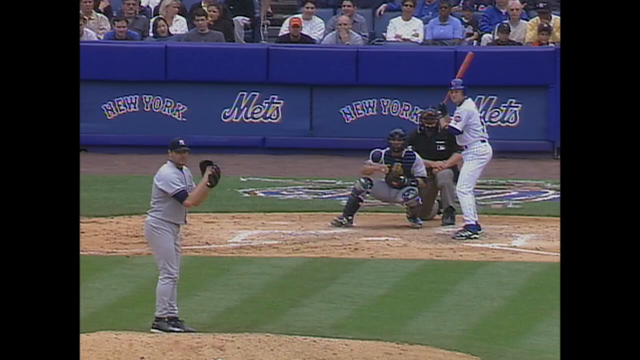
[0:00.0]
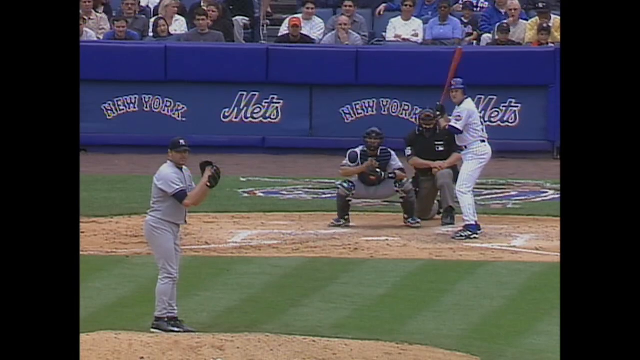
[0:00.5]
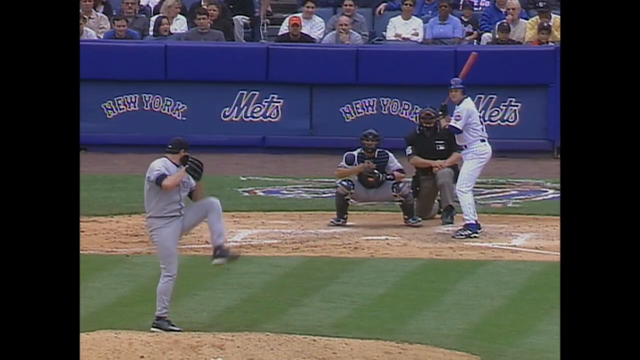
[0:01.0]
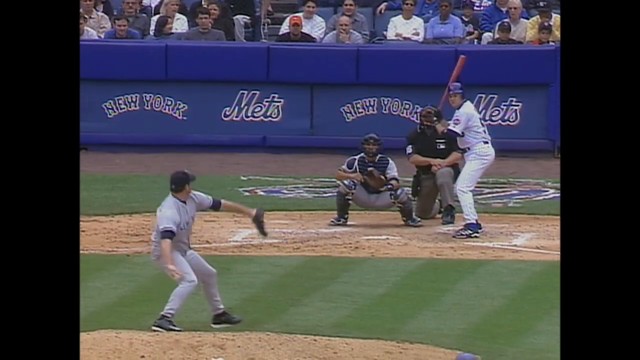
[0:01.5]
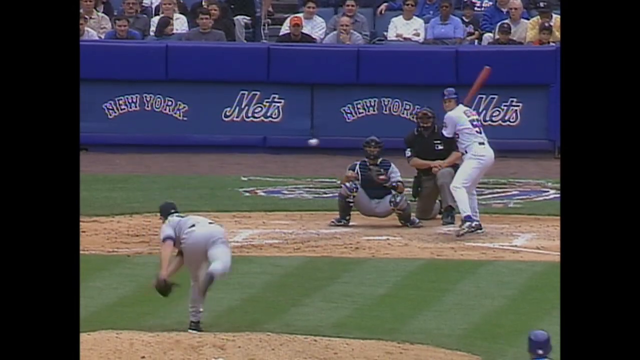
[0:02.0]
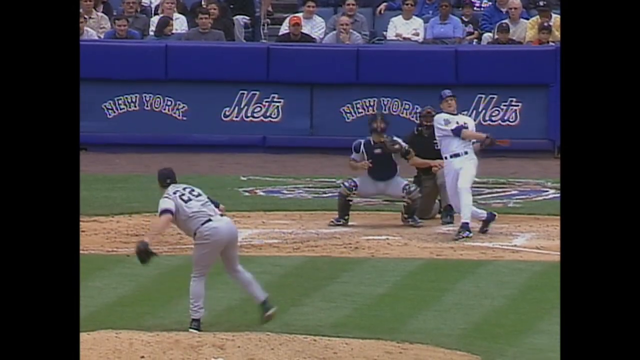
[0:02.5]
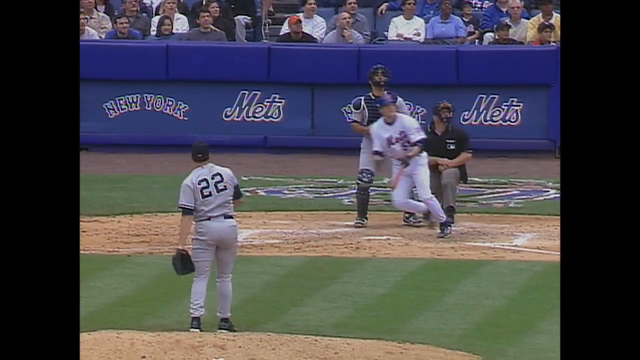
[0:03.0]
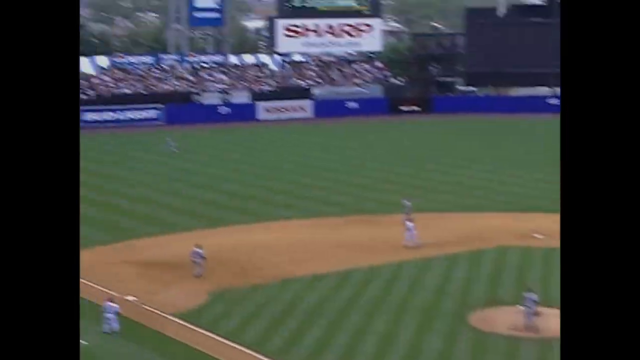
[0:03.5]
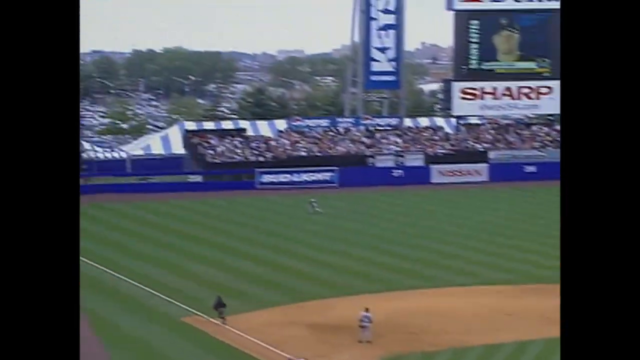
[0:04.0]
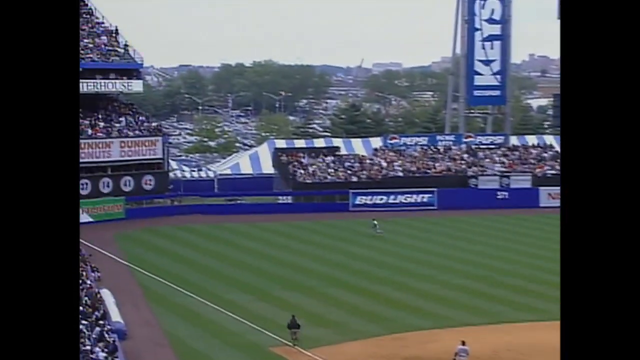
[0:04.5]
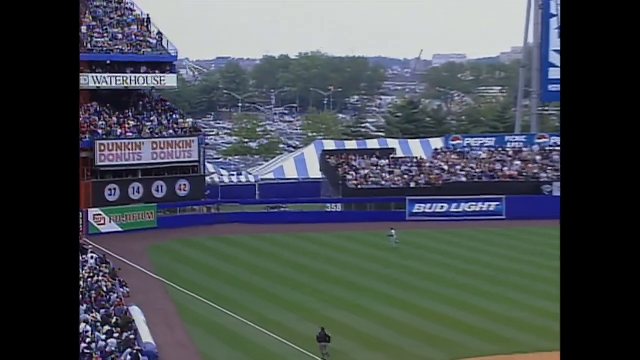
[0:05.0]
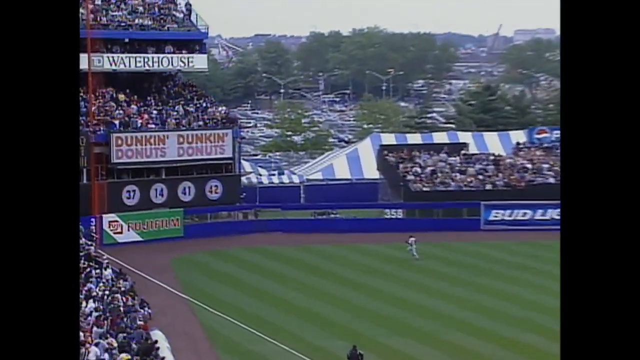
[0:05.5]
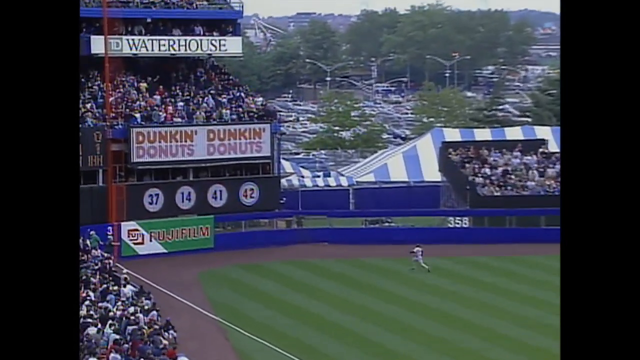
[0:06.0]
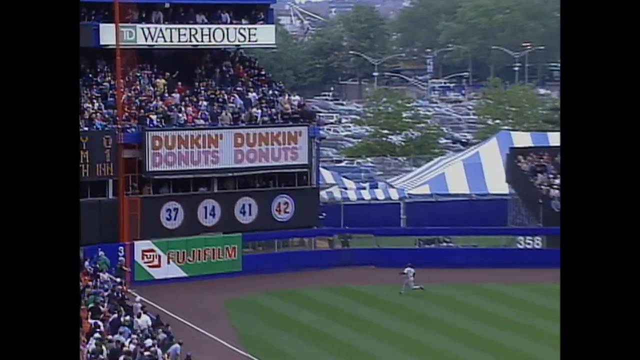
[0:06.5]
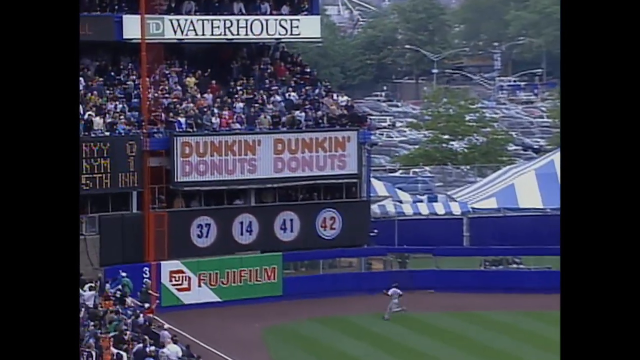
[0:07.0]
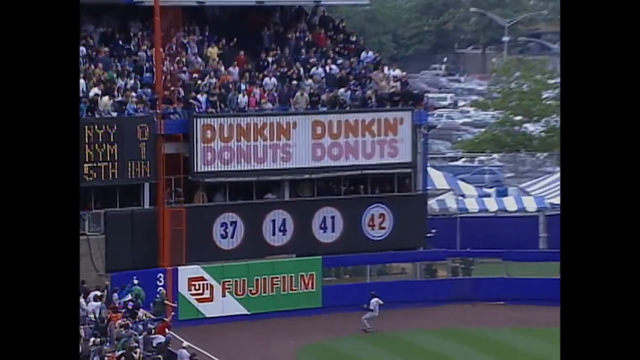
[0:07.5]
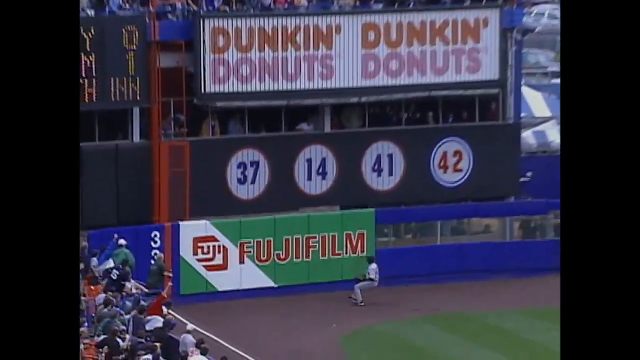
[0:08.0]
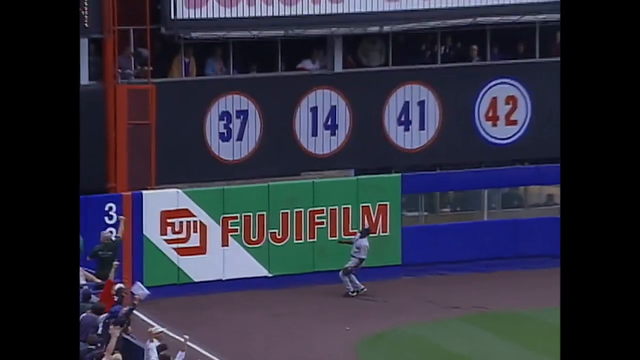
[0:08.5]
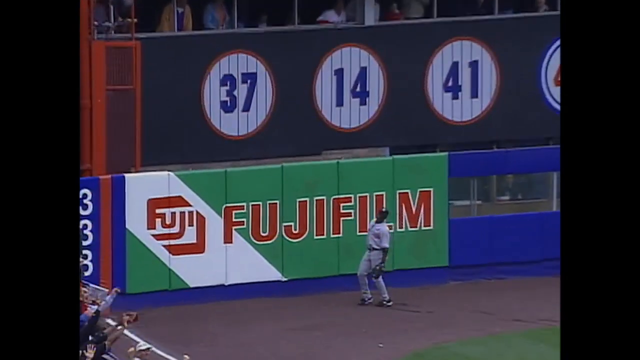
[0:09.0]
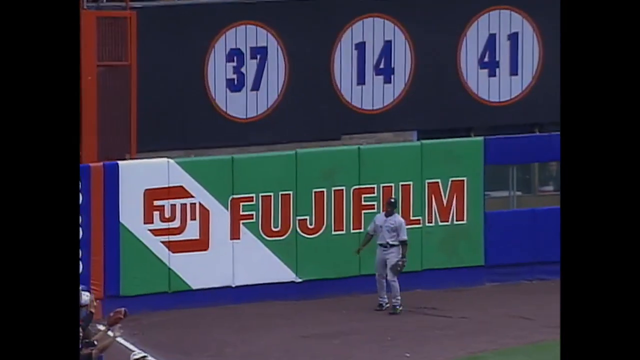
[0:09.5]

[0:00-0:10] The scene begins during a baseball game between the New York Yankees and the New York Mets. The Yankees are pitching, wearing a gray jersey with a dark blue hat, and the Mets are hitting. The hitter wears a white striped jersey and a blue helmet and holds a red bat. The pitcher holds his right hand in his glove, holding onto the ball, and looks behind him. The catcher behind the plate shifts his weight slightly to the left, anticipating the pitch. The pitcher picks up his left leg and brings his right arm back with the ball, then steps forward, bringing his arm forward, and releases the ball above his head. The hitter picks up his left foot, getting ready to hit, as the ball moves closer to the catcher and the hitter. He swings, and the bat makes contact with the ball as he takes a step forward out of the batter's box. The camera shifts behind the plate, showing the outfielder running toward the fence, trying to catch up with the ball, which lands just over the top of the fence for a home run.